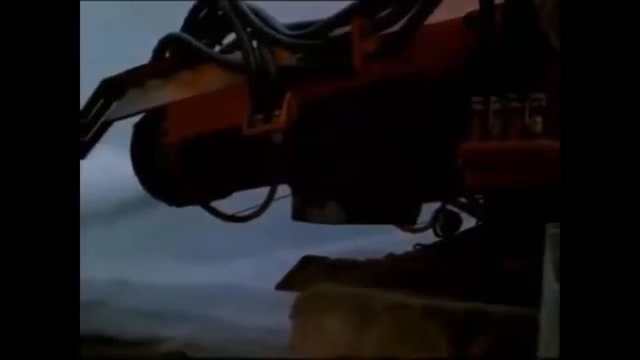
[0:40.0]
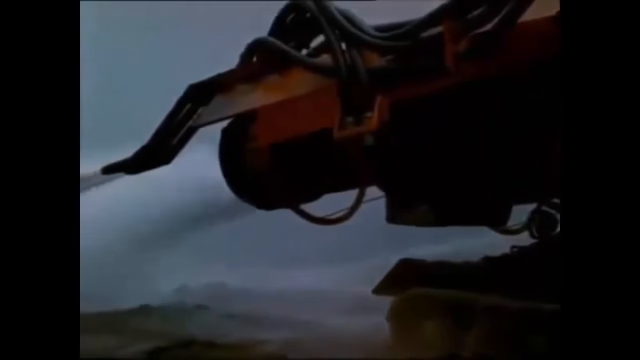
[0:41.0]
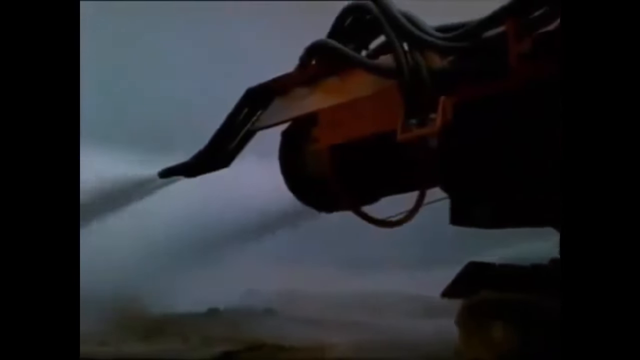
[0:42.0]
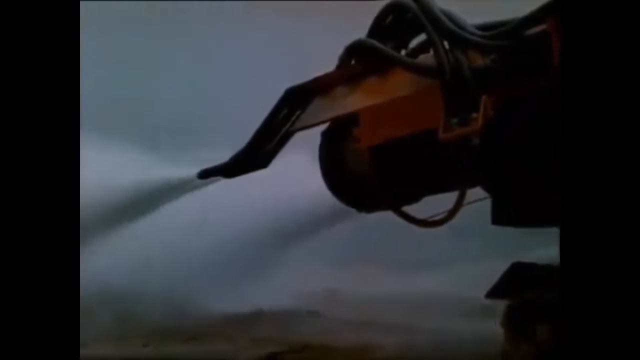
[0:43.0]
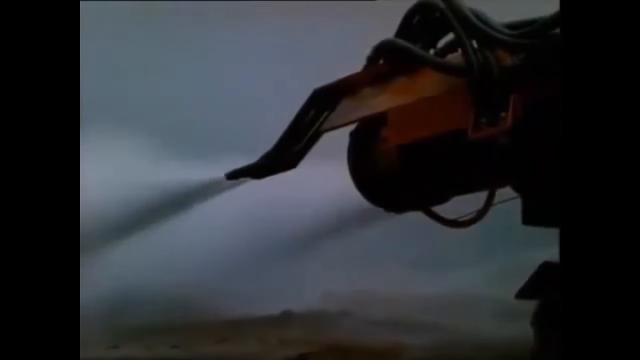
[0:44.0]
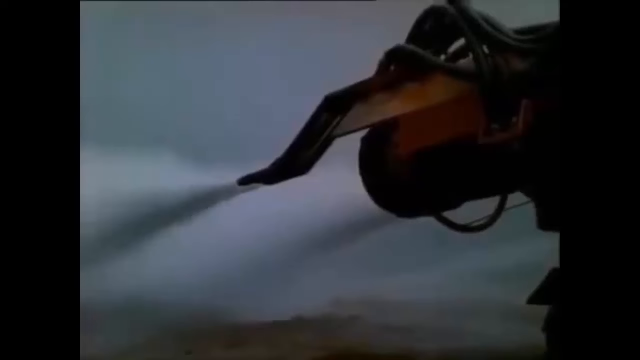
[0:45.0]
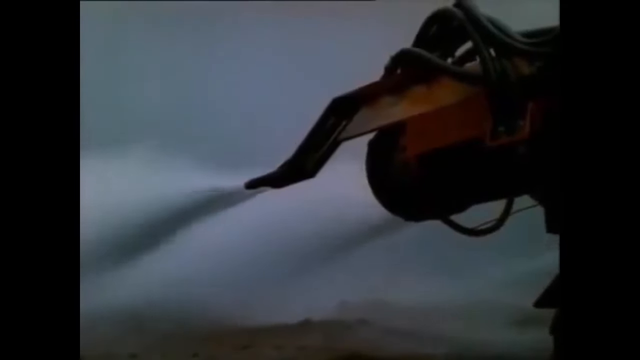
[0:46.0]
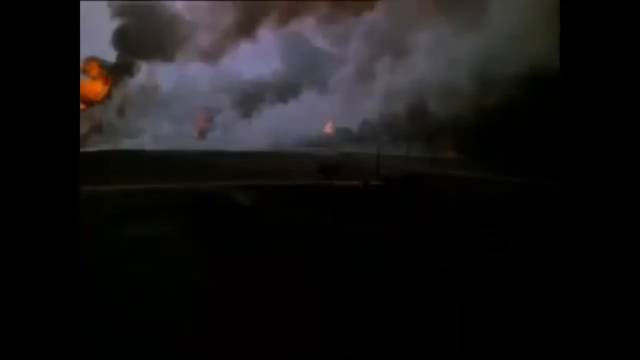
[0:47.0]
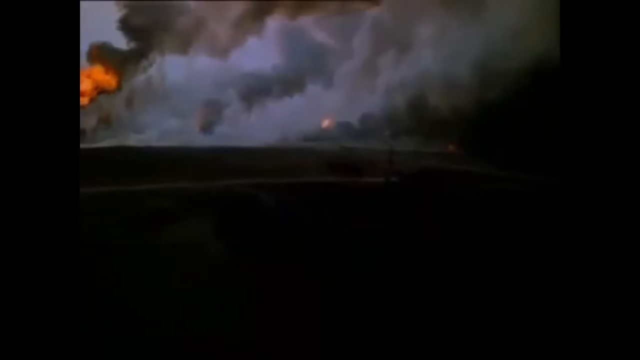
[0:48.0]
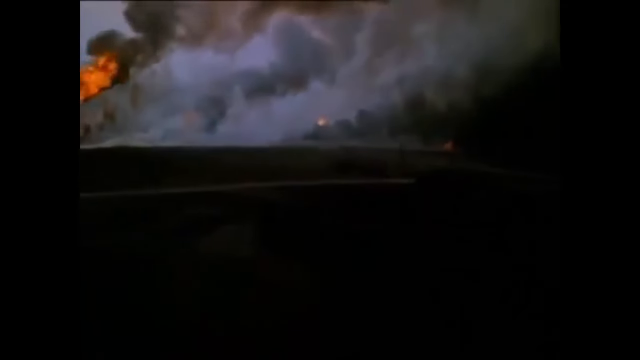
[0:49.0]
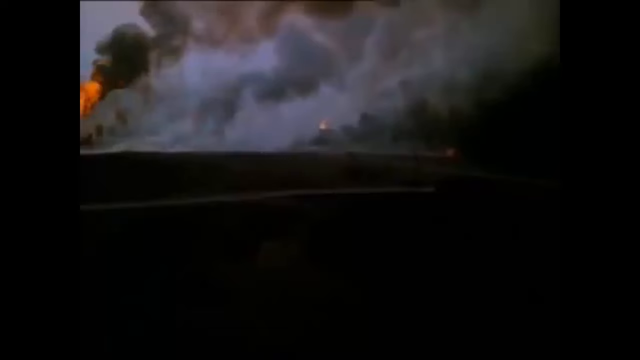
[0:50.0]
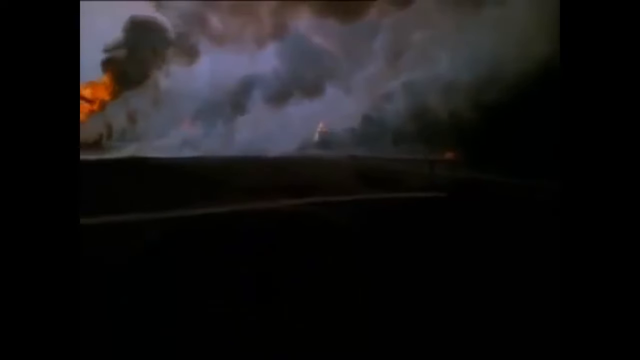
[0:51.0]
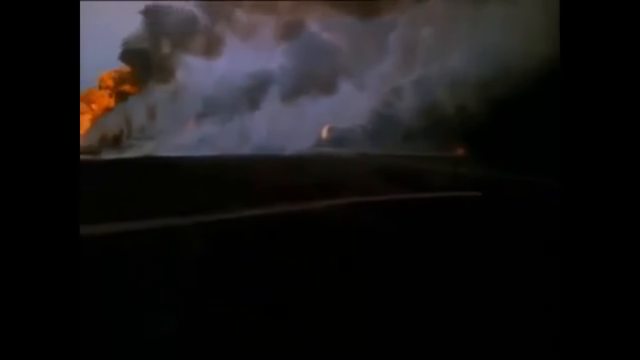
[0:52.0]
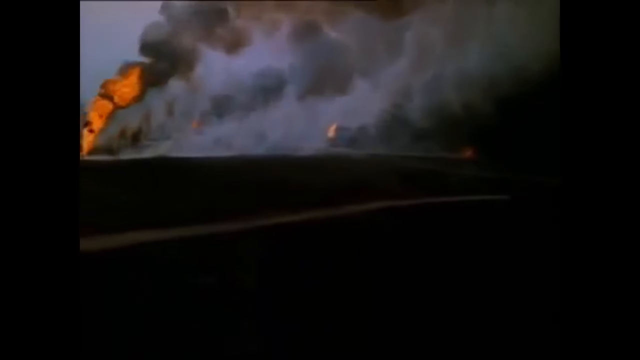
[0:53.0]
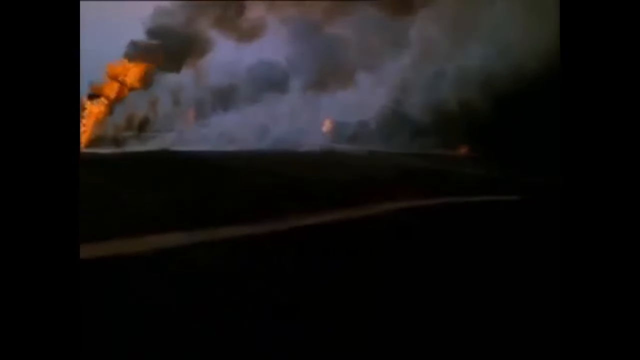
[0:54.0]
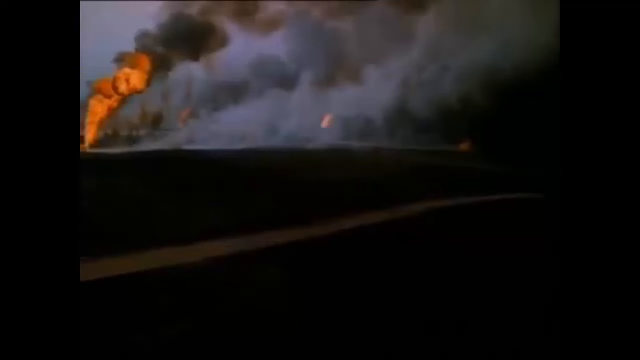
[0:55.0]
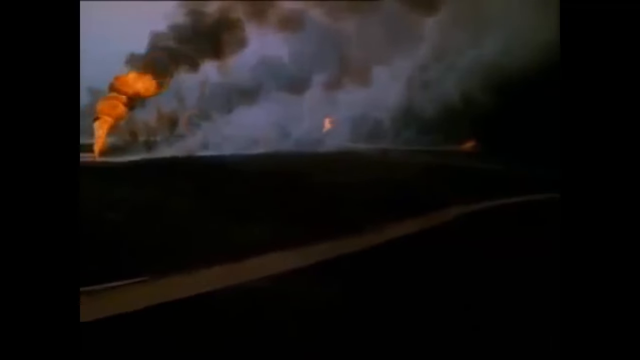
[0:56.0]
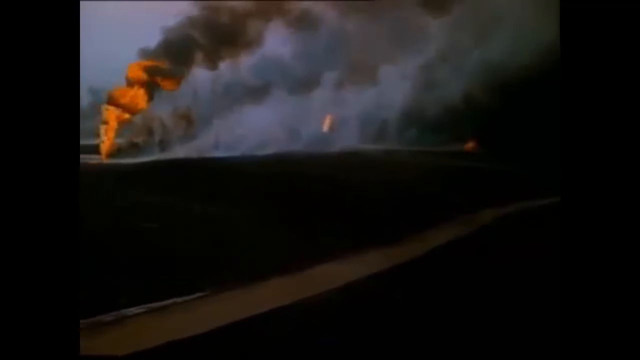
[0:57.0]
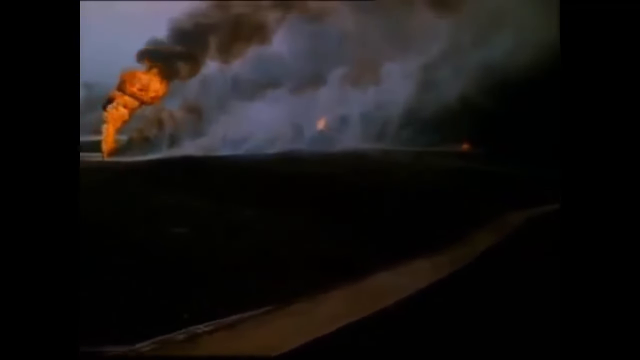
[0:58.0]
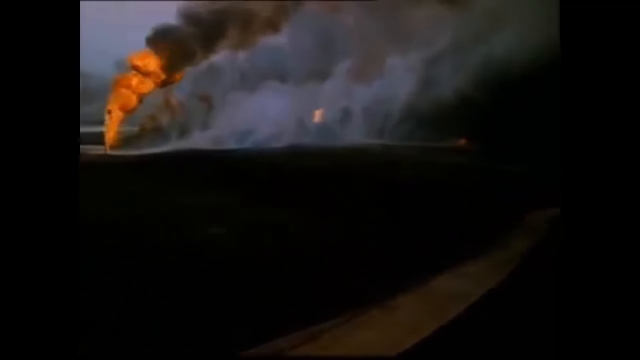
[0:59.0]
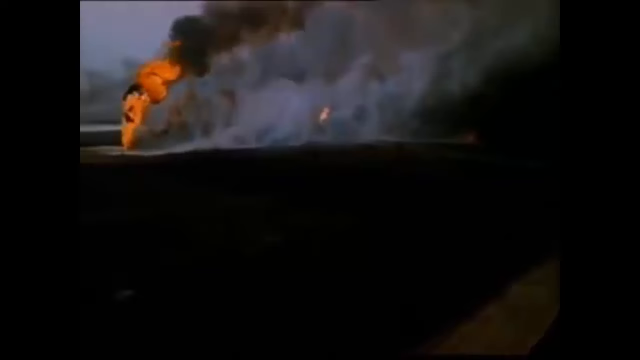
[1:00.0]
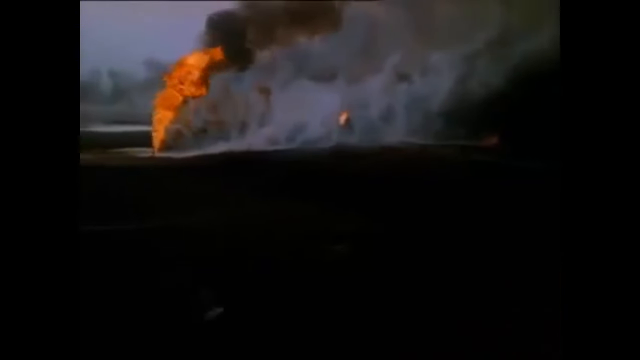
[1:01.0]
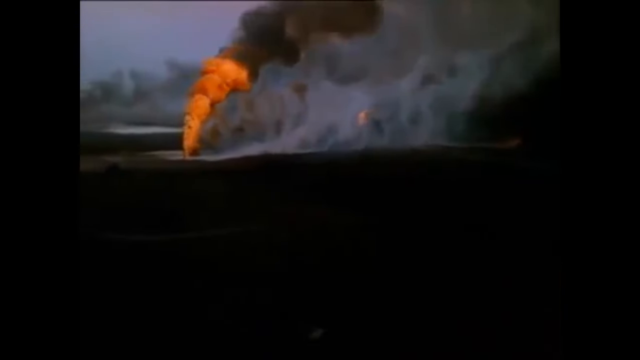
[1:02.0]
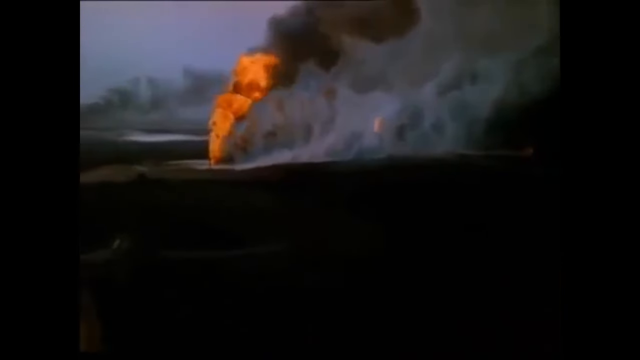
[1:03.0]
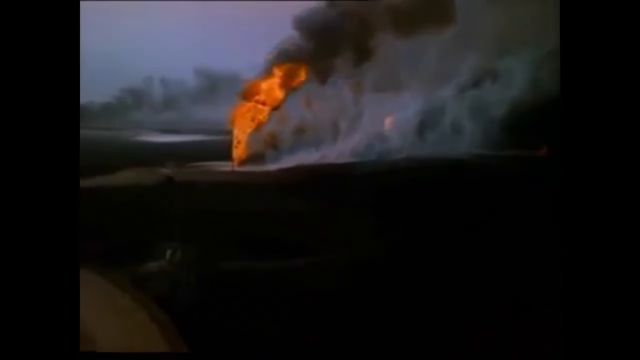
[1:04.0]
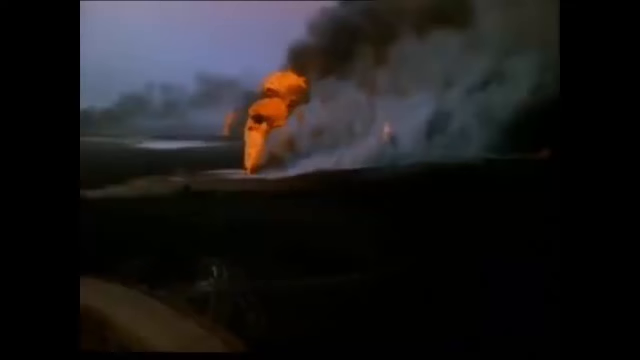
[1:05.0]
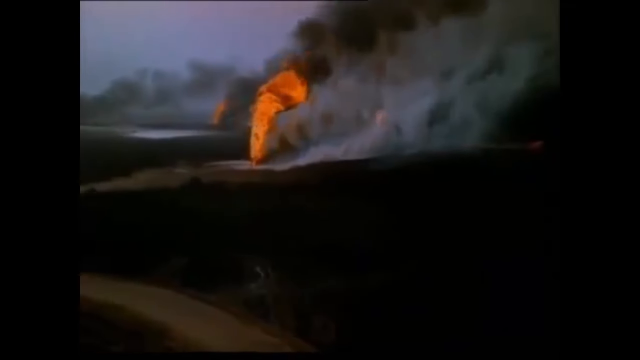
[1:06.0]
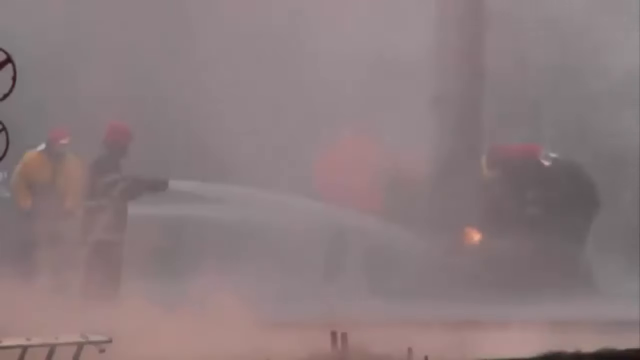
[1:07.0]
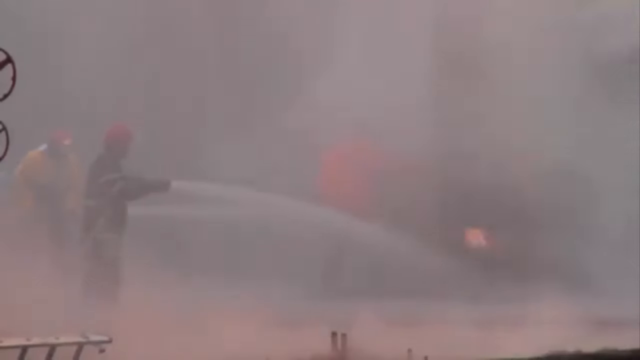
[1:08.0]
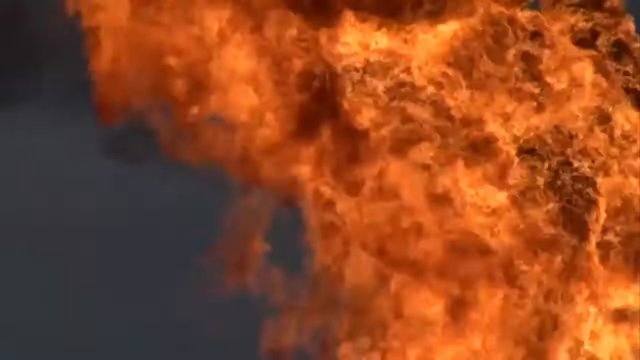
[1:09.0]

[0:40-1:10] Many people work to control the fire using modern technology. The technology apparently is being used to understand the effectiveness of the machine, and many people appear to be measuring and monitoring what is going on.